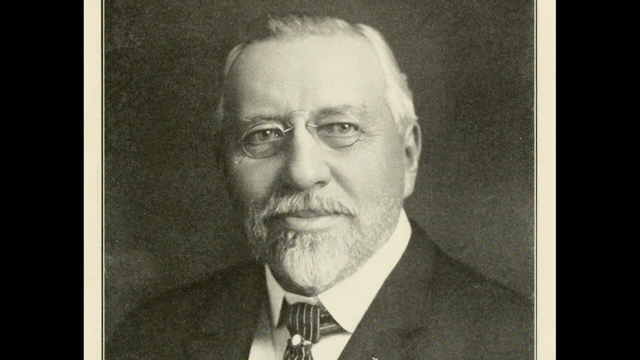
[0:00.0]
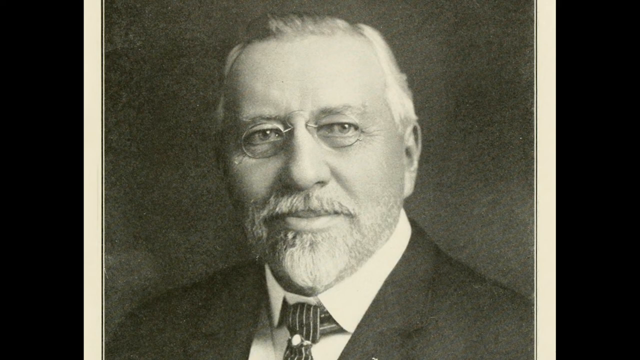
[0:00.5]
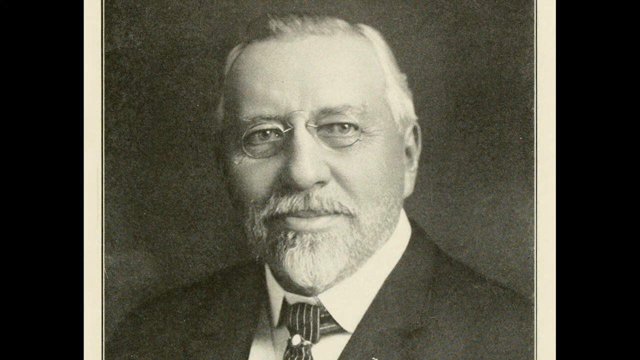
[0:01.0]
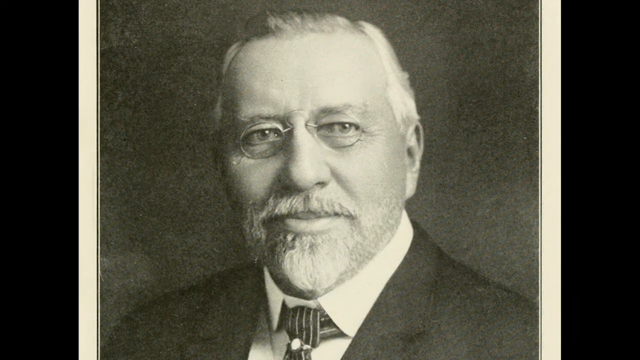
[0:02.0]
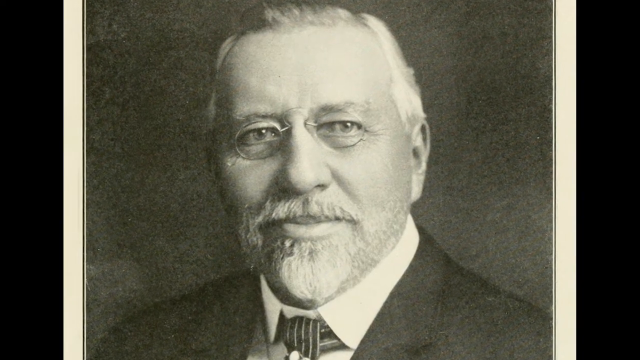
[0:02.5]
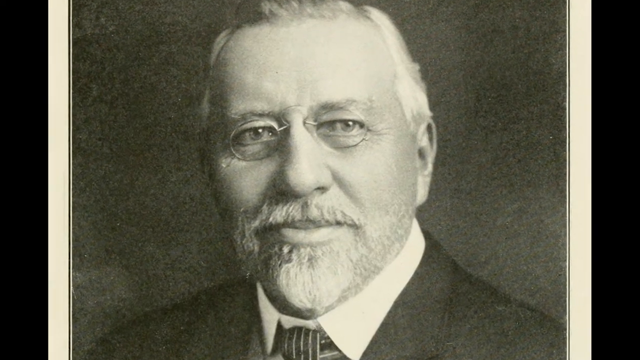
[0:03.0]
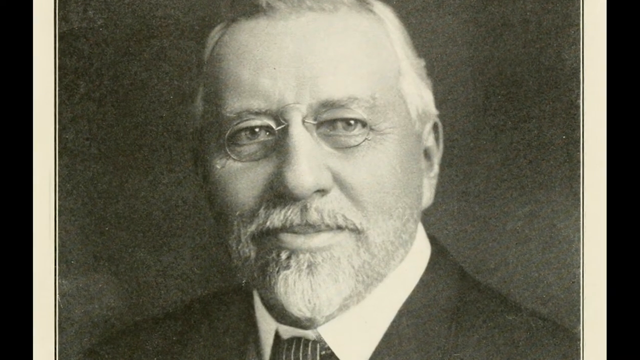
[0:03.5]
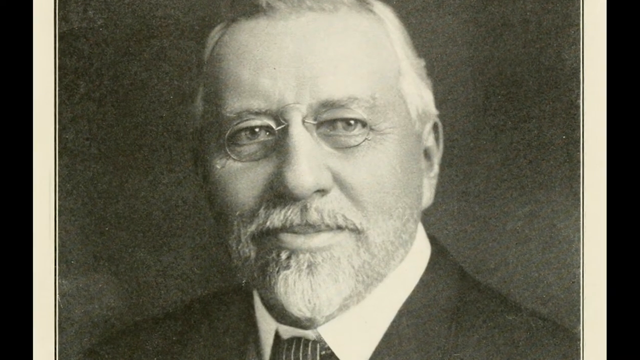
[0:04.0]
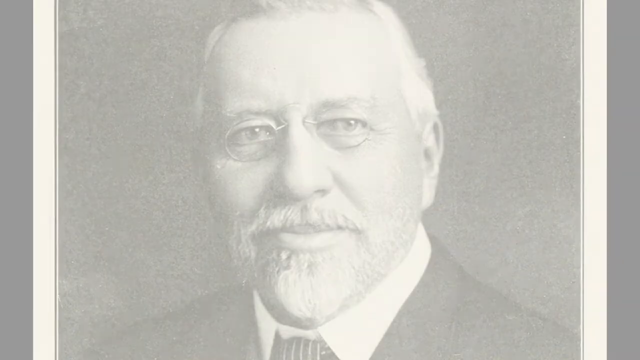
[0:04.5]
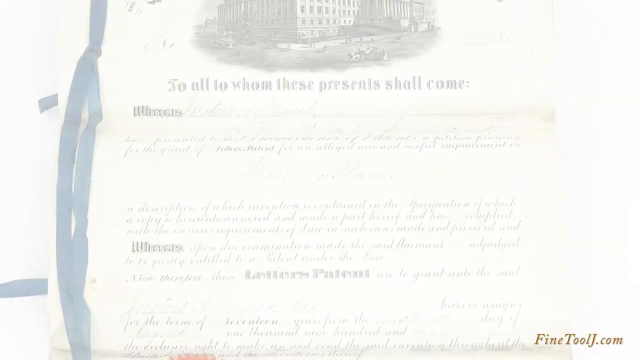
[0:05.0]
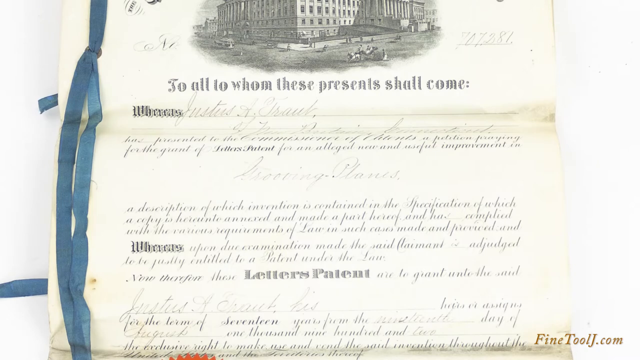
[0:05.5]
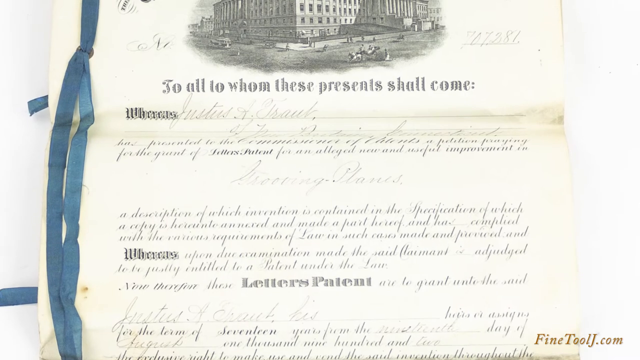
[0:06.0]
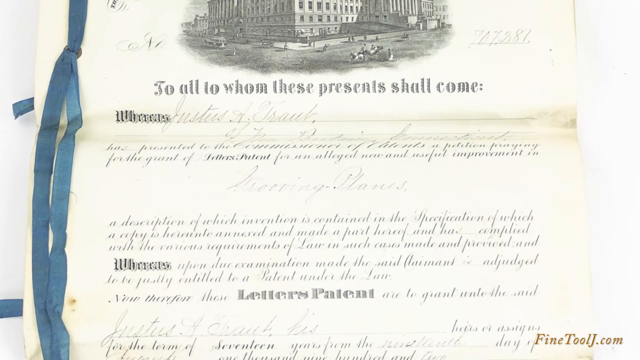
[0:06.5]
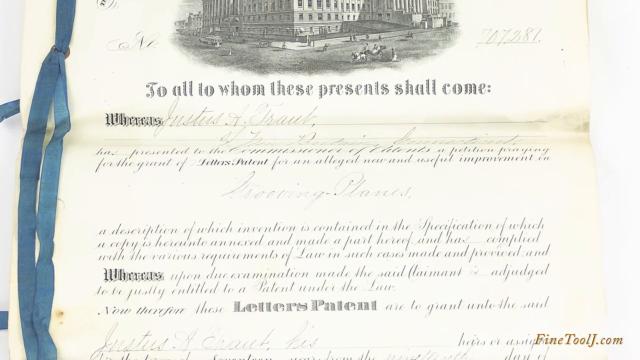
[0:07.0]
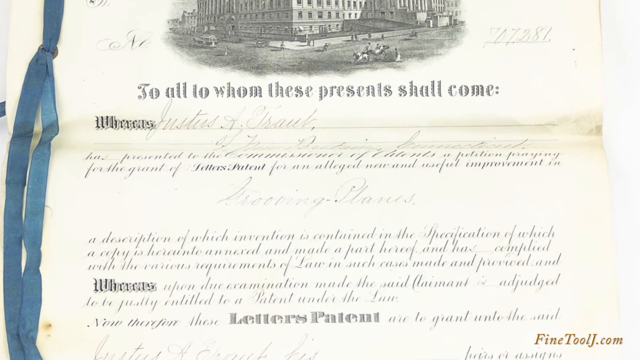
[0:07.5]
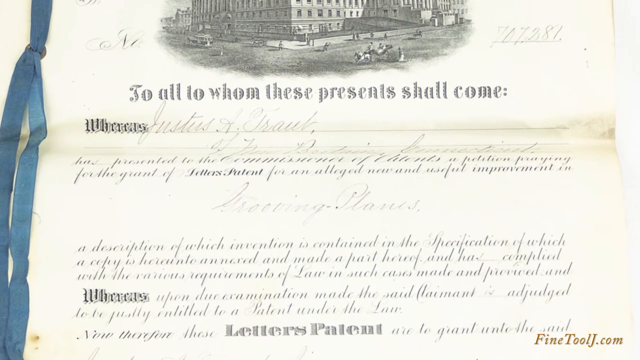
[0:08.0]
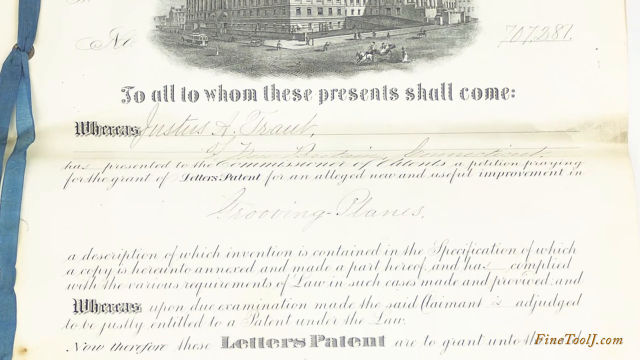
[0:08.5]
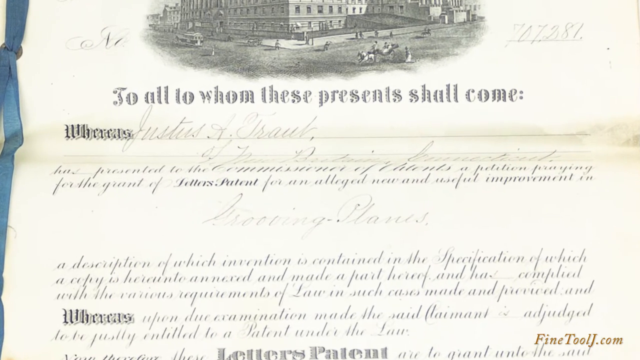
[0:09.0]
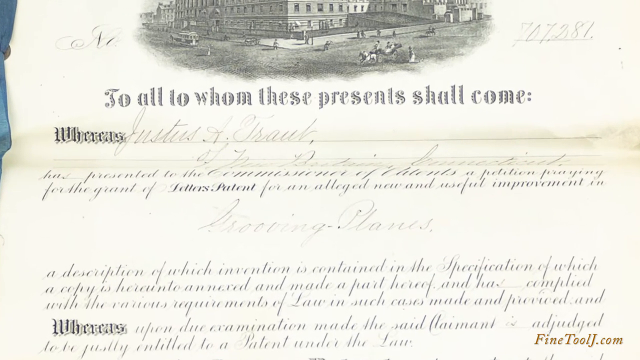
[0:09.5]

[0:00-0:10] An illustration shows an older man wearing glasses. He has a beard and wears a white shirt, a black and white striped tie, and a black jacket or blazer. The background behind him is dark gray. The video zooms in on the picture, then fades to white, and when it fades back in, "finetool.com" appears in the lower right corner. An image of an old-time document follows, with a blue ribbon on its left side. The document is white with text on it; the legible text at the top, in gray, reads "To all to whom these presents shall come:". Above that is an illustration of a street, people walking, and large buildings.